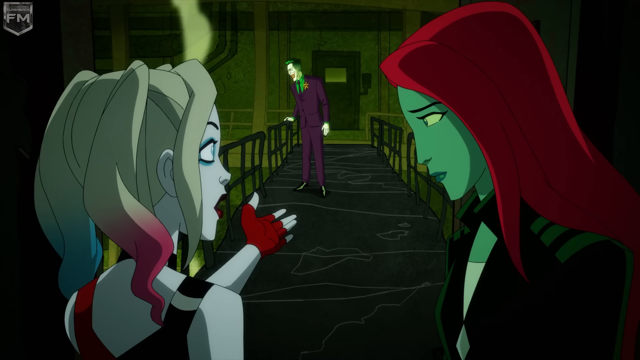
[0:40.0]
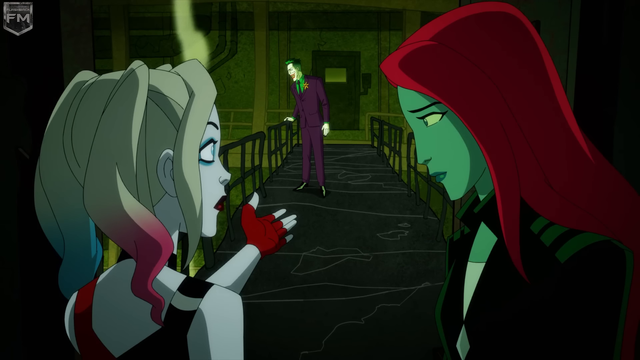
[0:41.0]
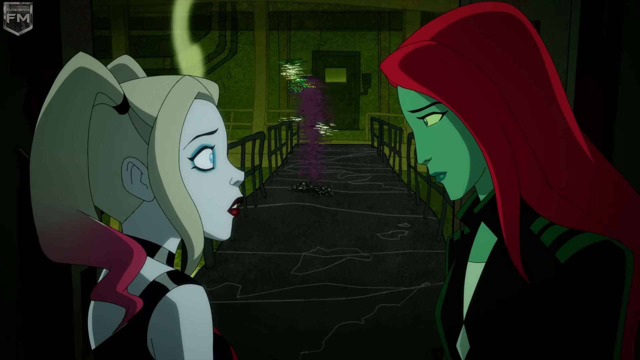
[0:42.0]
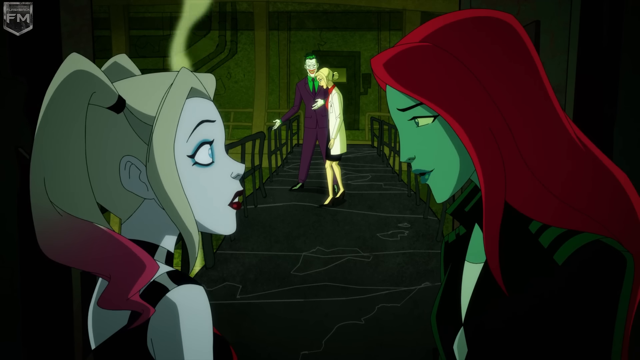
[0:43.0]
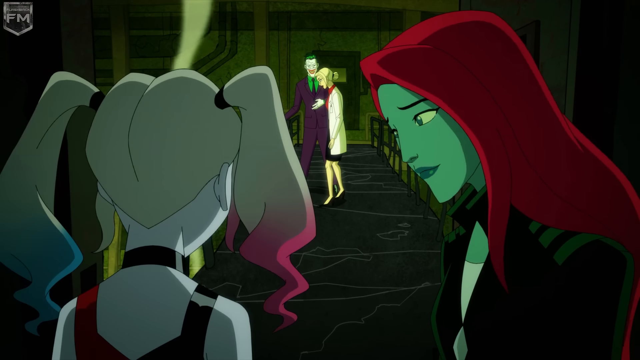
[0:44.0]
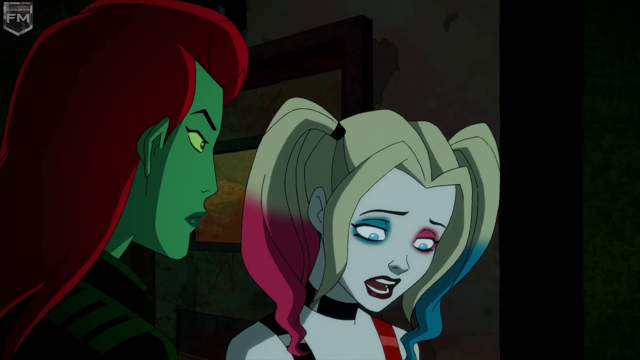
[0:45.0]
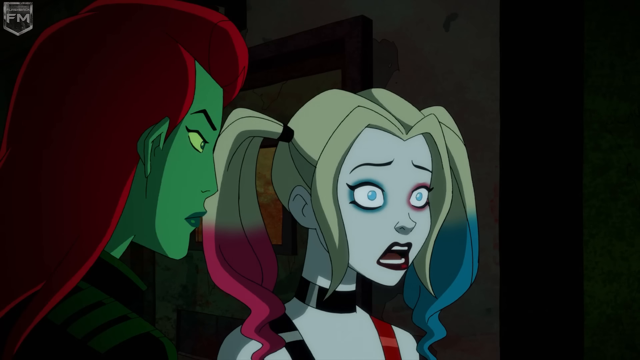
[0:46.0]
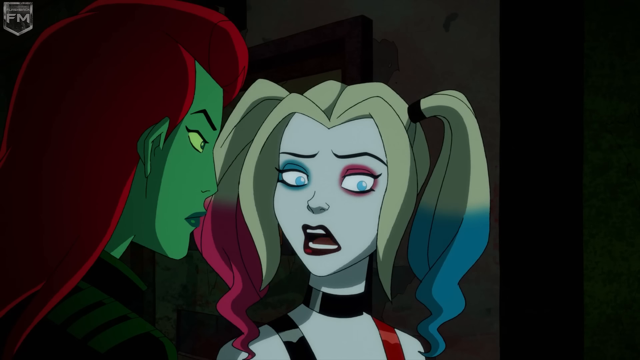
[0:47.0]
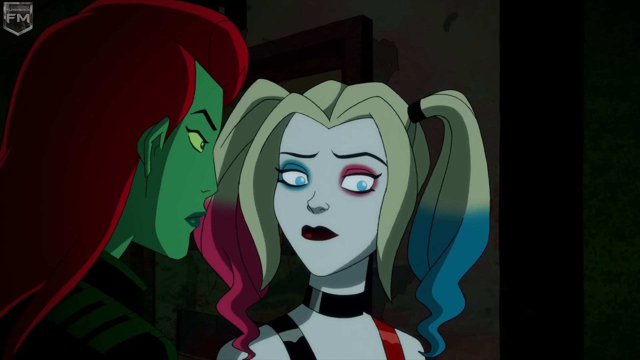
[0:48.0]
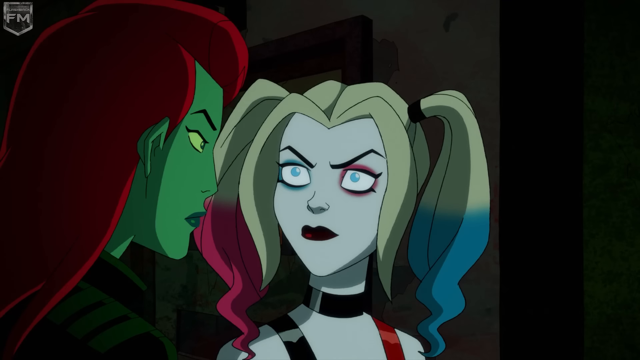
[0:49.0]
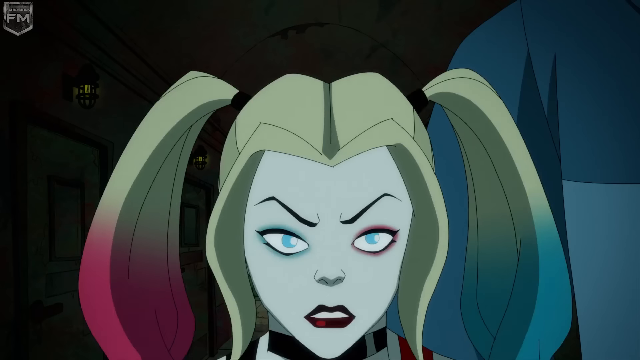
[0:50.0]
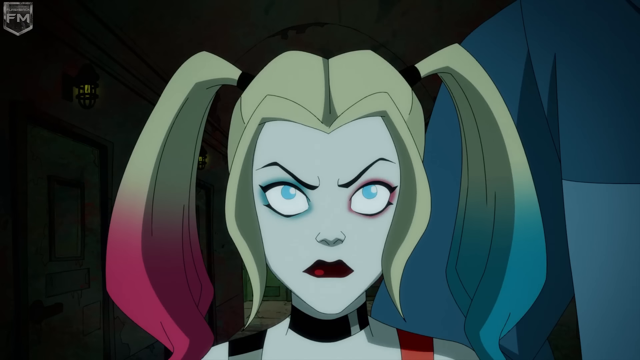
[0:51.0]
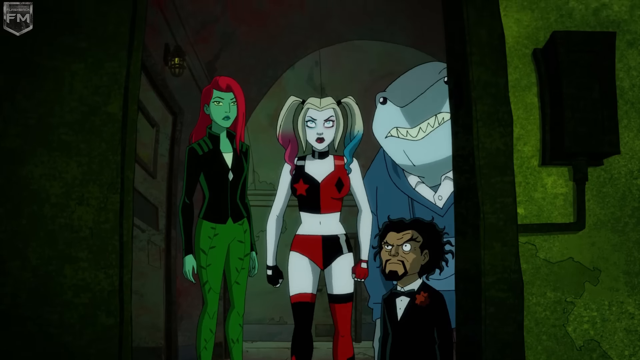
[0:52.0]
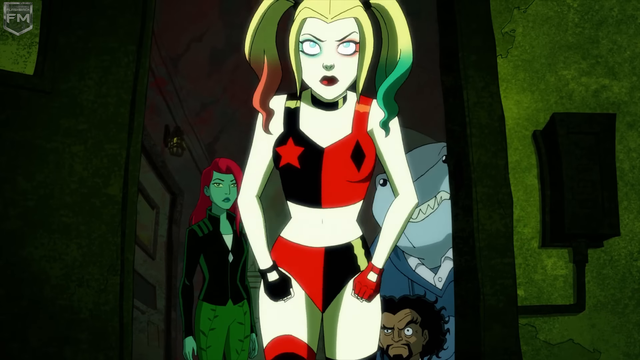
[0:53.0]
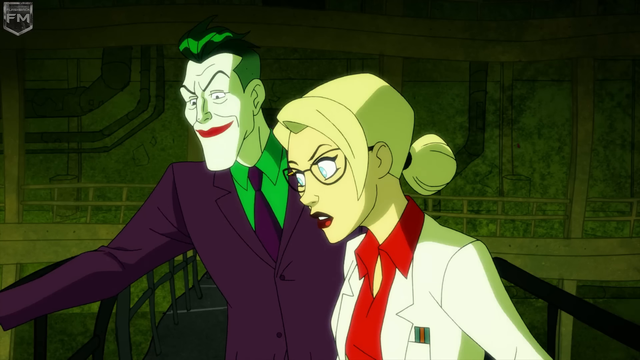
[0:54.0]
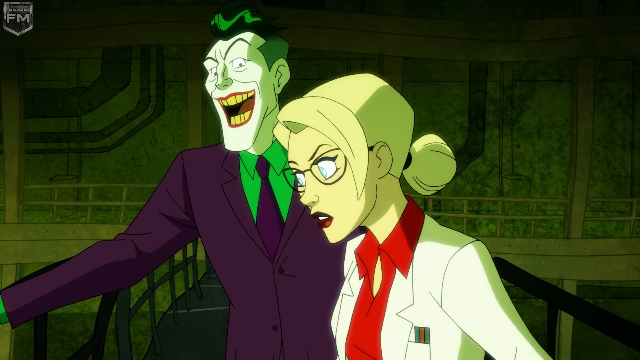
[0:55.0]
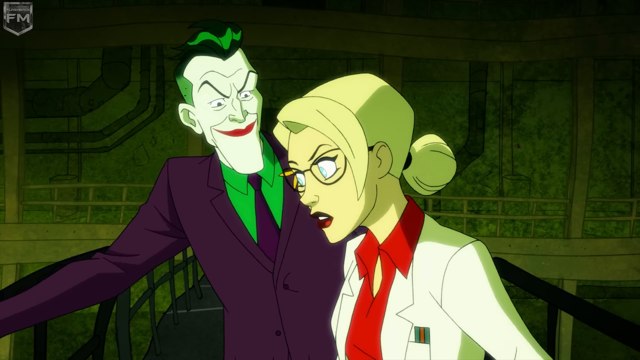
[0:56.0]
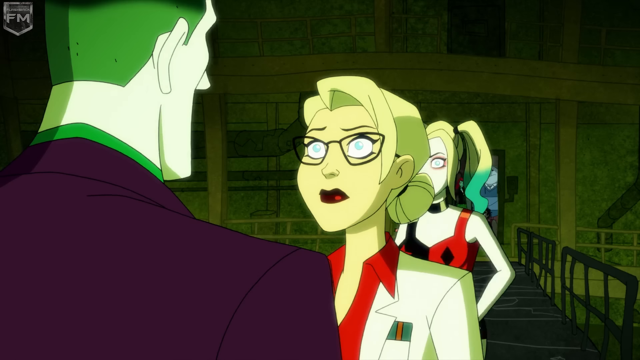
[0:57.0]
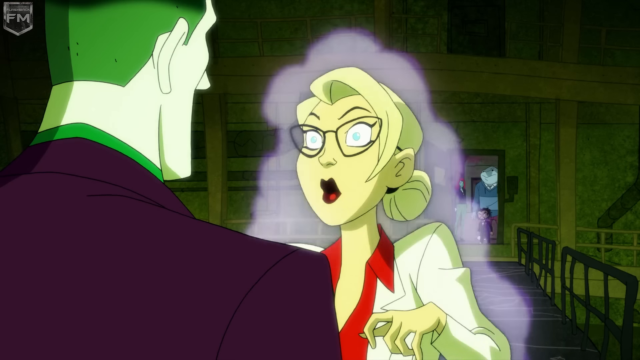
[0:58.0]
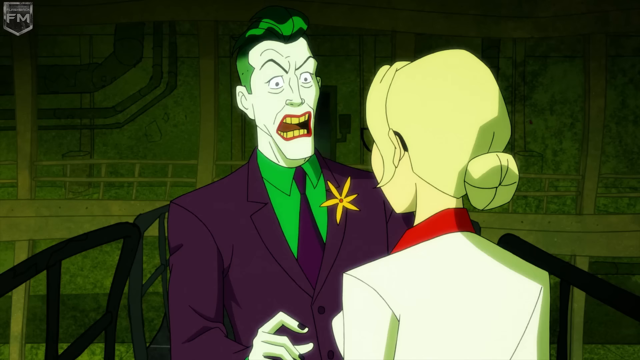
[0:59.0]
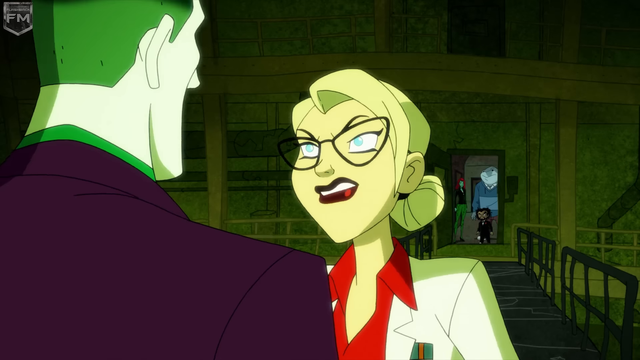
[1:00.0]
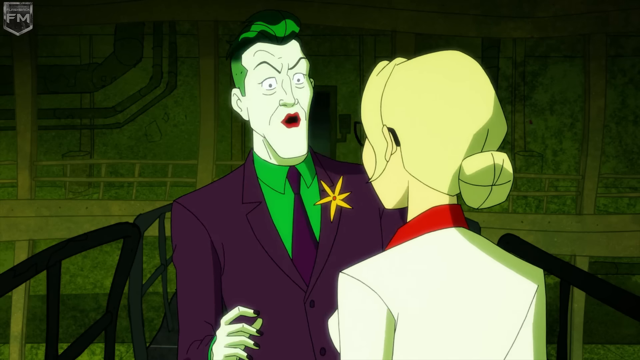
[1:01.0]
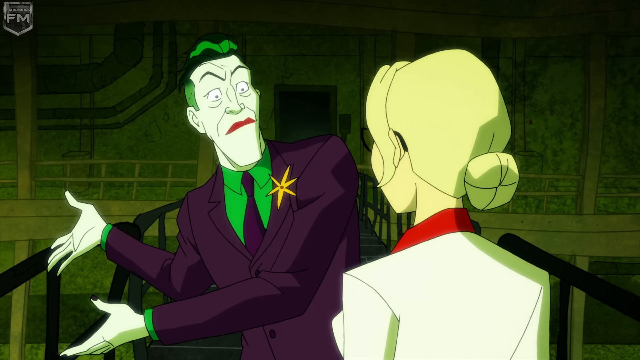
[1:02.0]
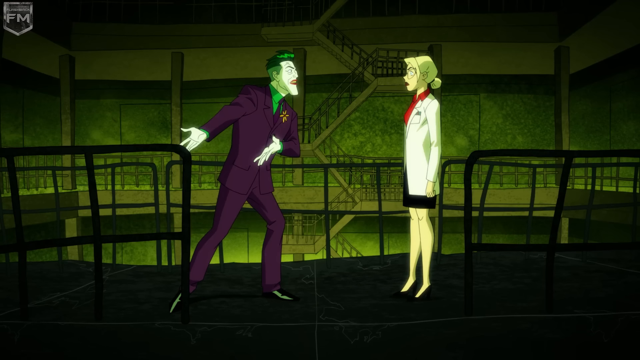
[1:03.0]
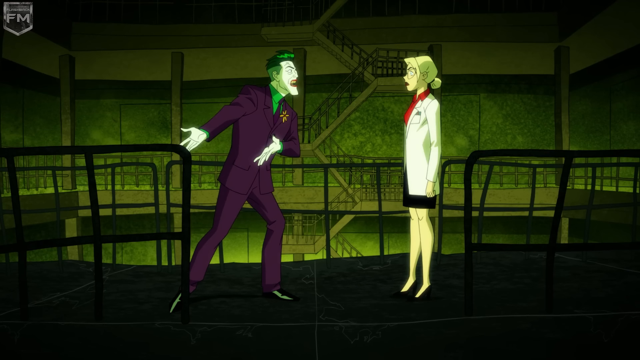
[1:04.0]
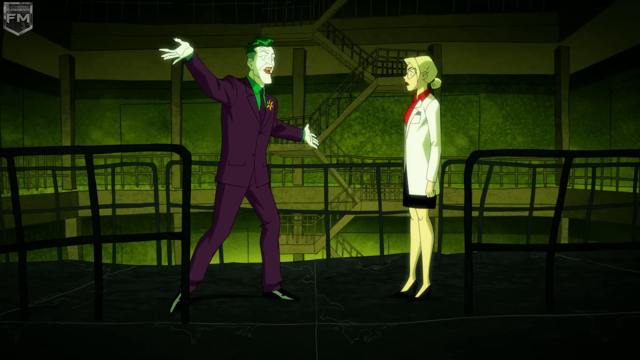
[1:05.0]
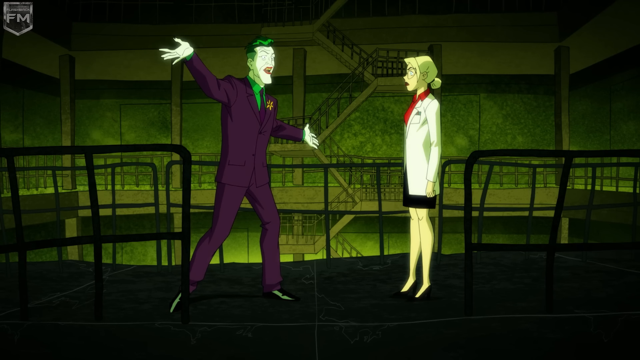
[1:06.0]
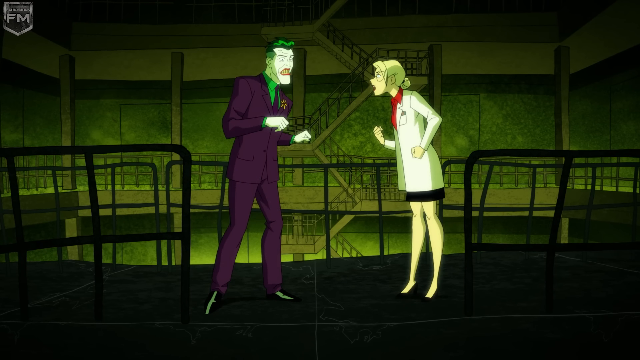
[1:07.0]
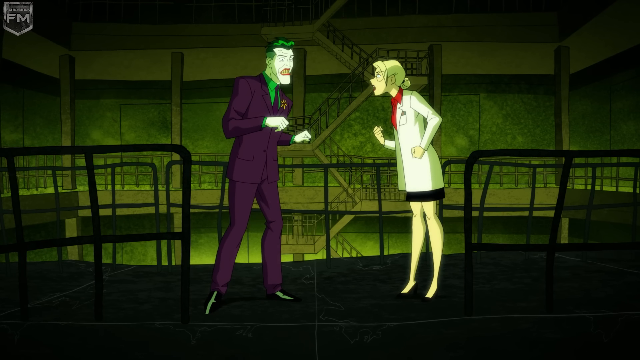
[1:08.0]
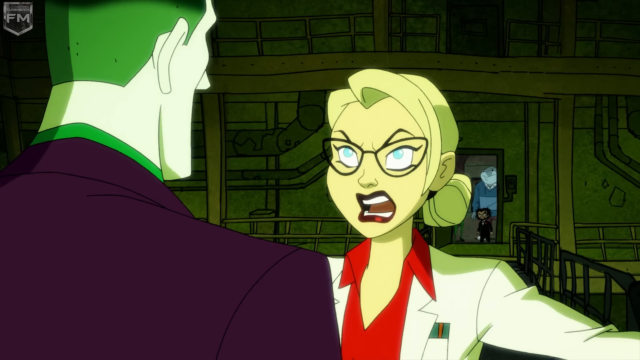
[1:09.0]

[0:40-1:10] In this cartoon animation, a woman with blonde pigtails and a woman with long red hair and green skin stand in a doorway, looking out towards a black platform where a man with green hair and a purple suit stands. The man visibly shakes and distorts. Then a woman with blonde hair and a white lab coat appears standing next to him on the walkway. The view pans in on the two women in the doorway, the one with blonde pigtails and the one with red hair and green skin, who are having a conversation. The woman with blonde pigtails stands up angrily and walks towards the characters on the walkway. She walks up behind the blonde woman in the white lab coat, and then her character appears to disappear. The man in the purple suit and the woman in the white lab coat have an intense conversation, the man's hands flailing about and gesturing as though they are having an angry conversation.